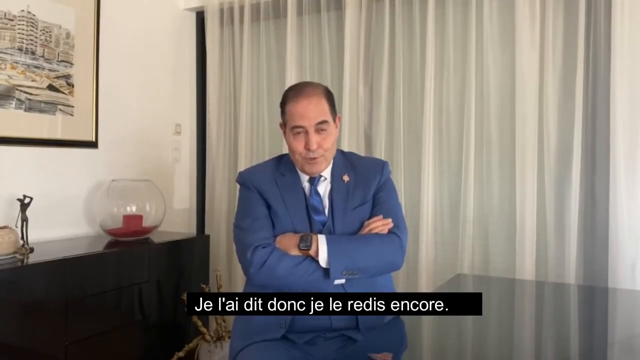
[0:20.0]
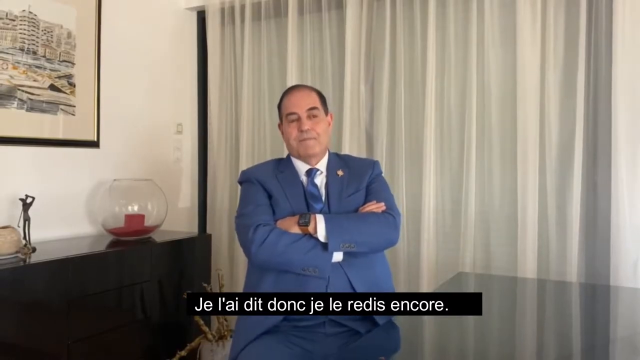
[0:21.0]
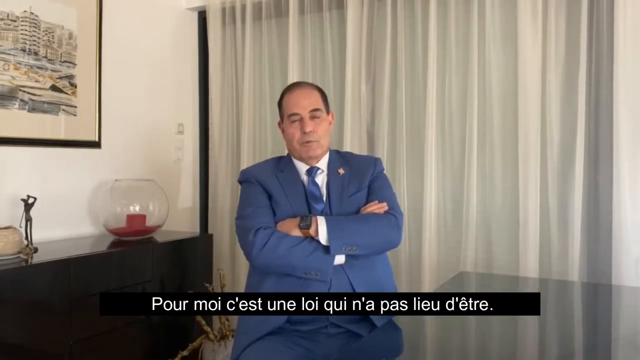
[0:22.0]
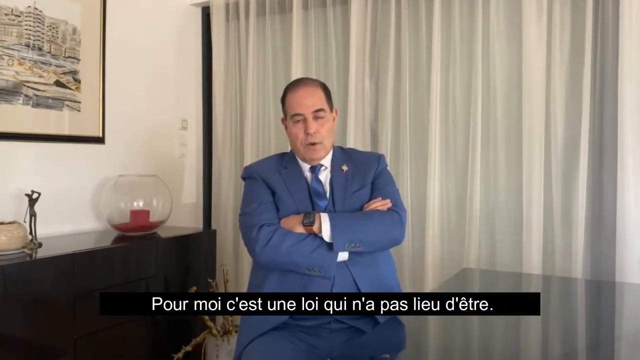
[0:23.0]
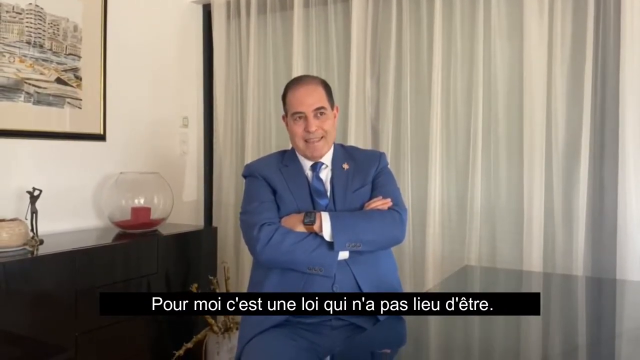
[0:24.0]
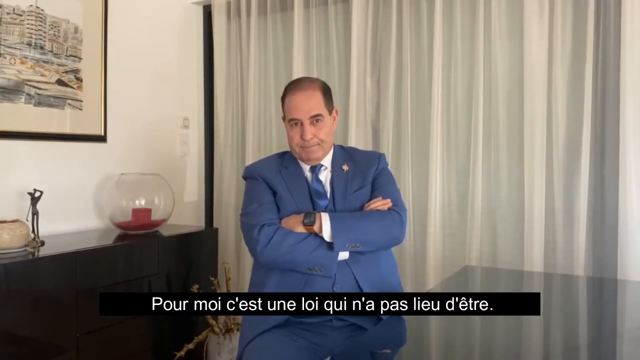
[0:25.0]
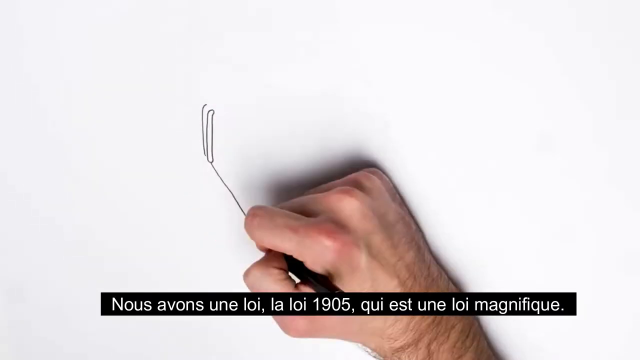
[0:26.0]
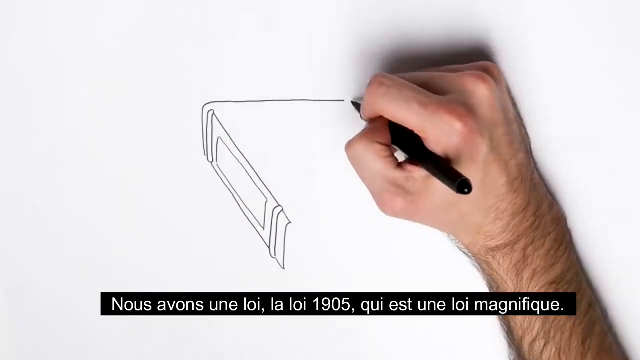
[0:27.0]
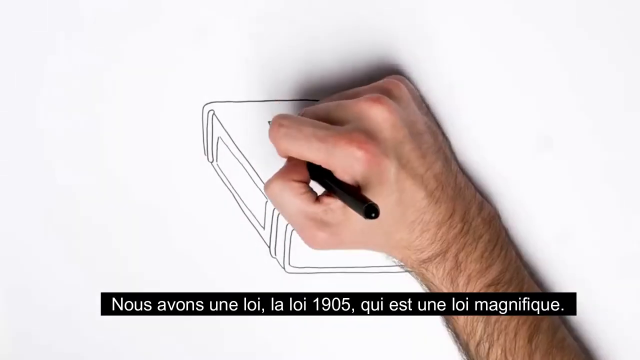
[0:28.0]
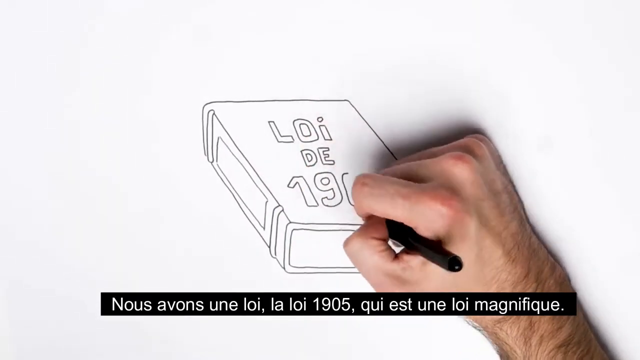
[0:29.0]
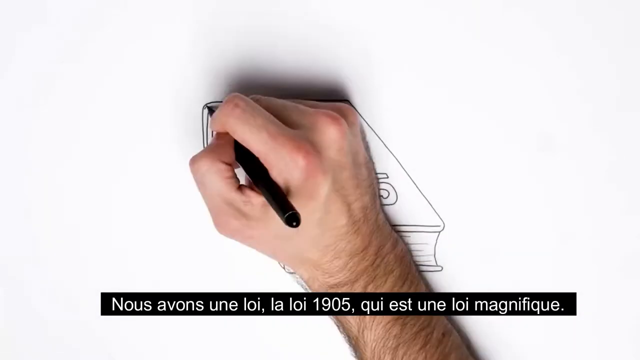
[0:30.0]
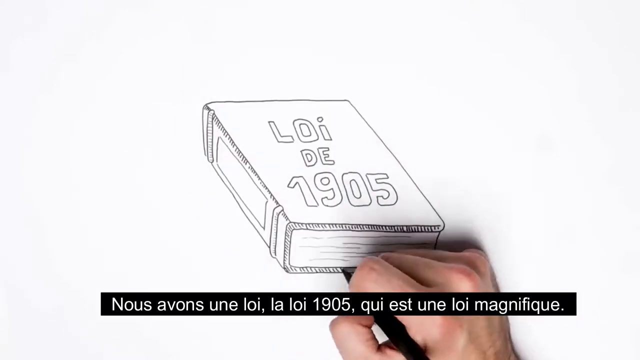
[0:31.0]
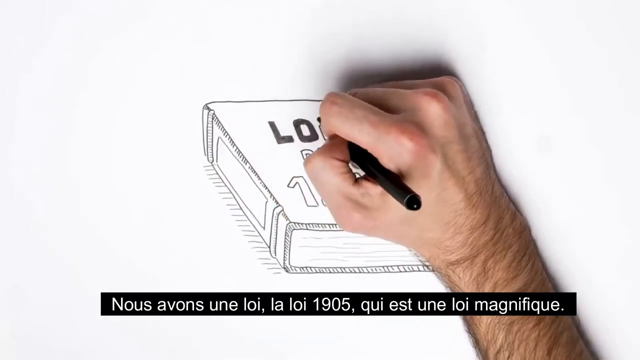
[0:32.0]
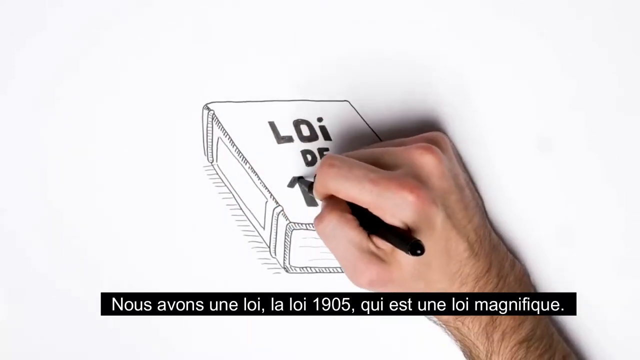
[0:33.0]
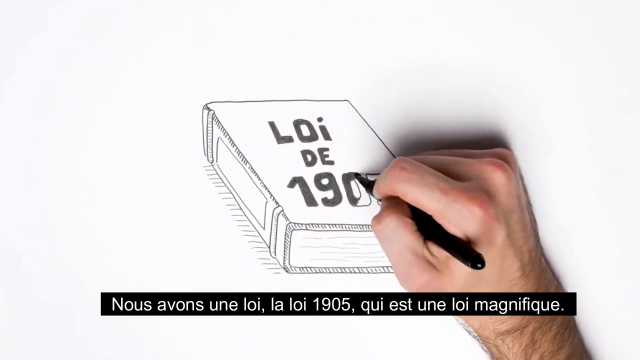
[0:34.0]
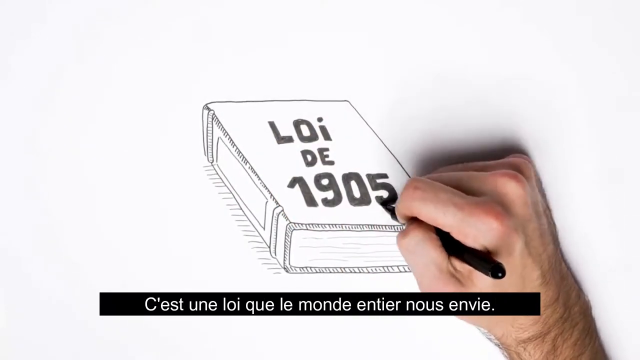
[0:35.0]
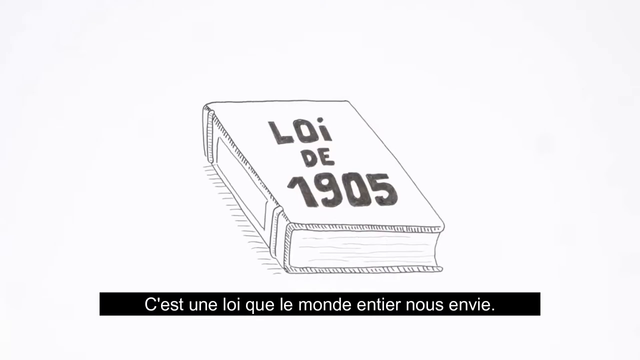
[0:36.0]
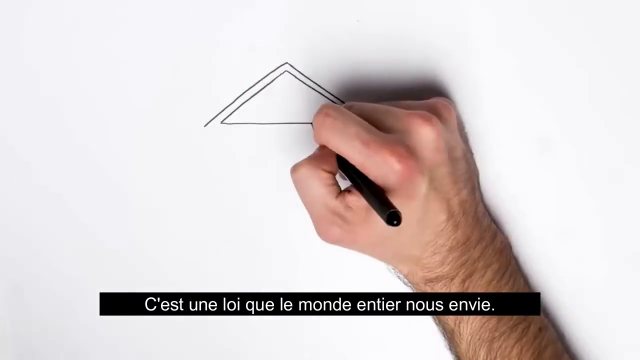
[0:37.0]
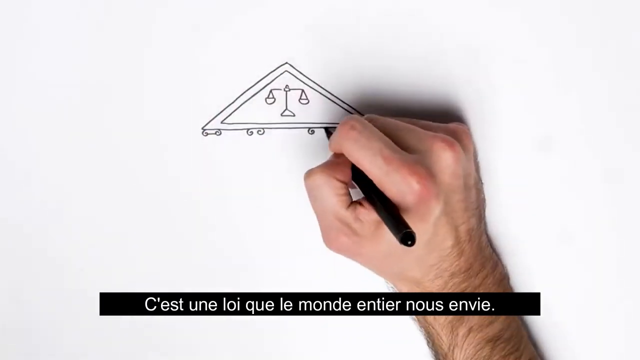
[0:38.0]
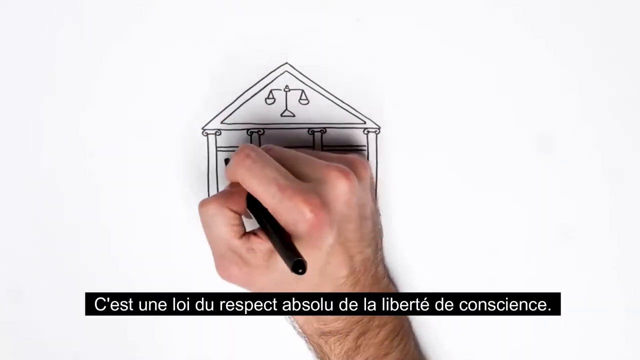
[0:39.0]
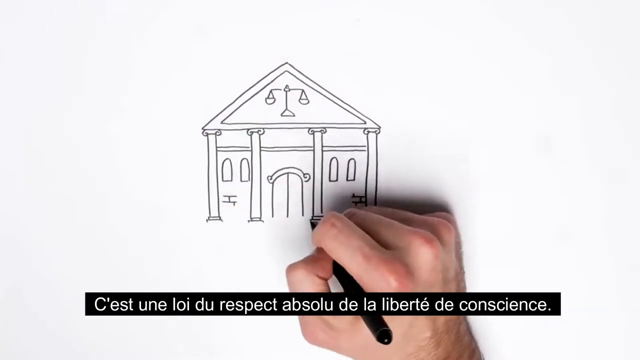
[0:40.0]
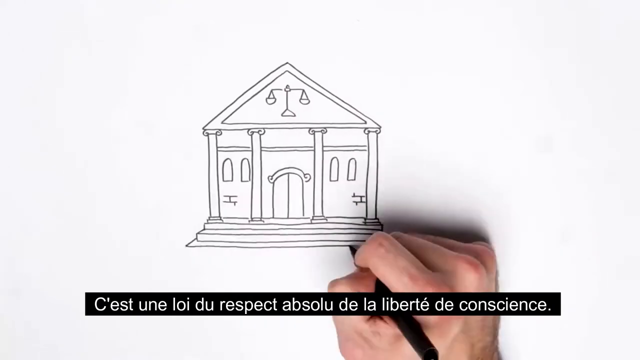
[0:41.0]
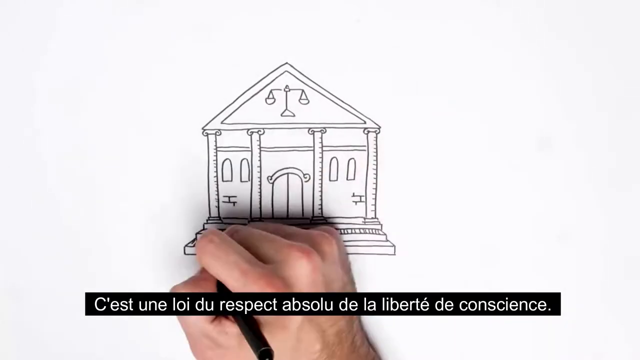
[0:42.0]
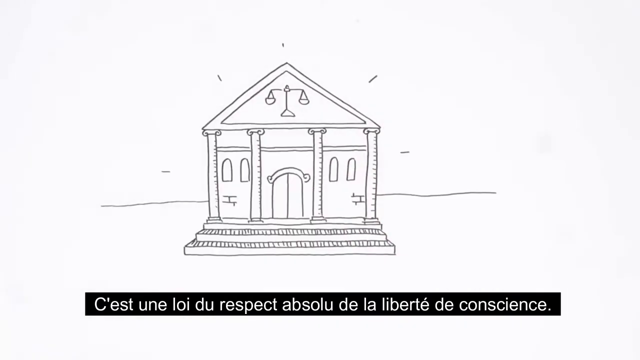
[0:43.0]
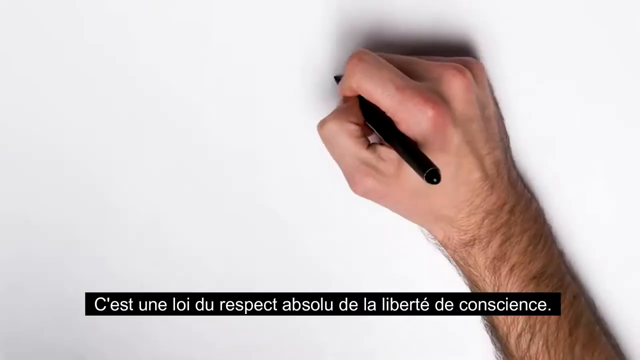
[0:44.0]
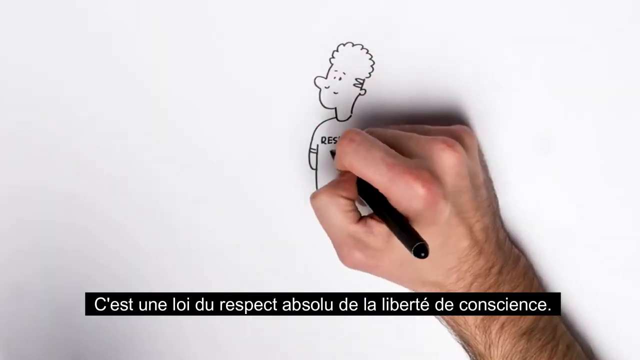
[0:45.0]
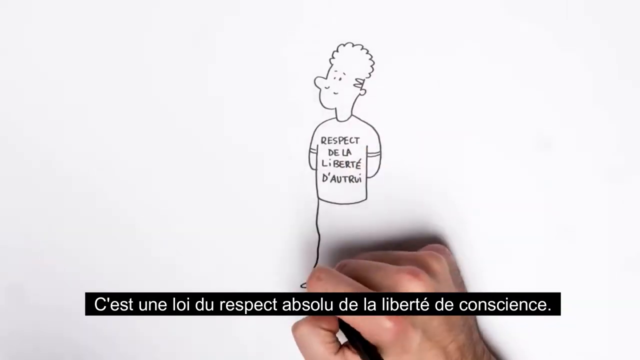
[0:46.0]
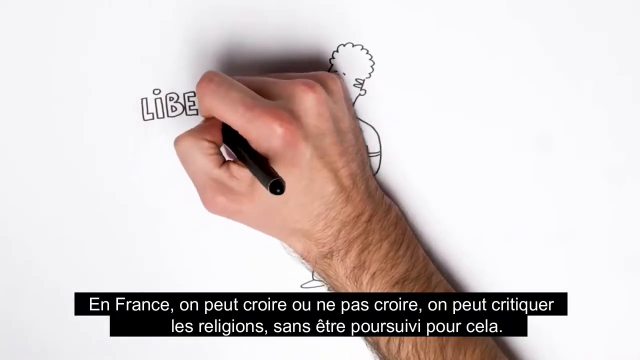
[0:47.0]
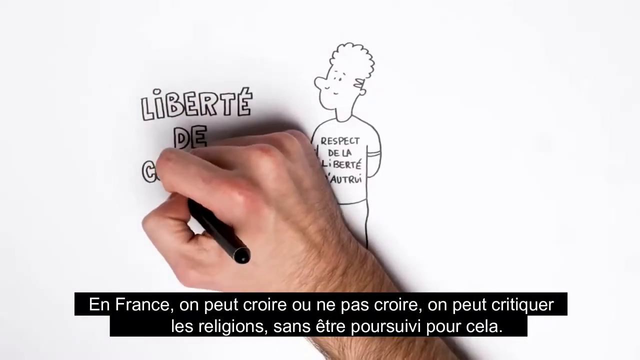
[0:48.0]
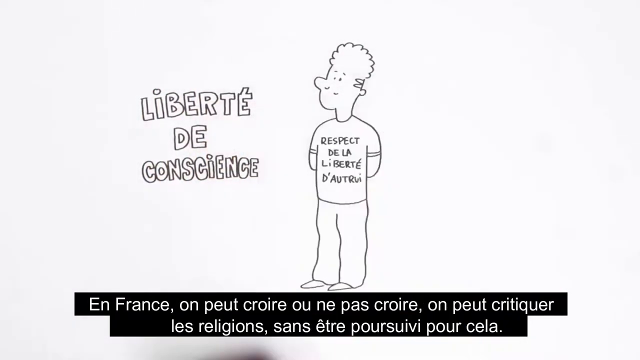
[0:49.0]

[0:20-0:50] The man keeps talking with his arms crossed and leans back in the chair he is sitting on. To the left, a picture hangs on the white wall. Below the picture is what looks like a black dresser with a glass bowl on top, and inside the bowl there appears to be a red candle, which is not lit. To the left there appears to be a small, unique-looking statue that looks like a person swinging a golf club. The scene changes to someone's right hand drawing very rapidly with a pencil. The hand draws a book with "Loi De 1905" on it, adds fine details, and colors in and shades the text on the front of the book in black. It then draws what looks like a courtroom, then a person, and then something to the left of the person having to do with liberty, in a foreign language.